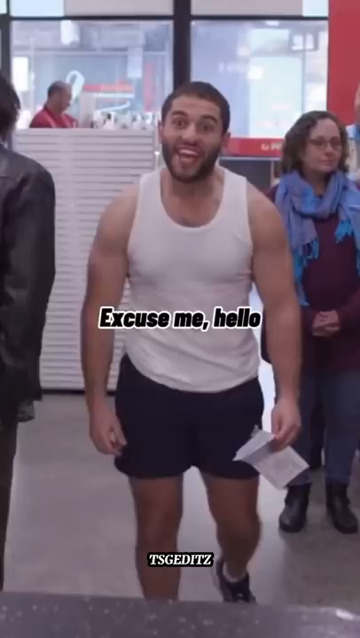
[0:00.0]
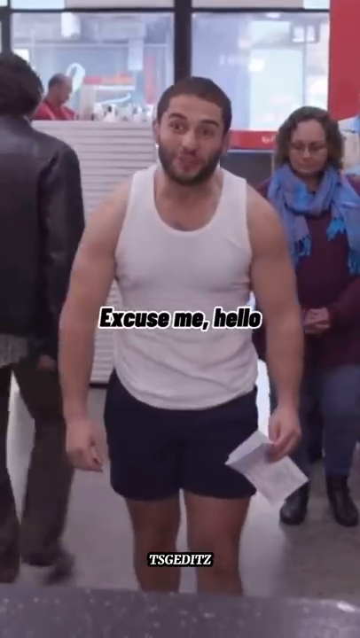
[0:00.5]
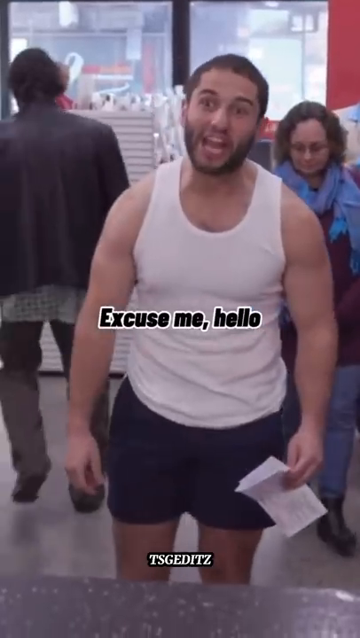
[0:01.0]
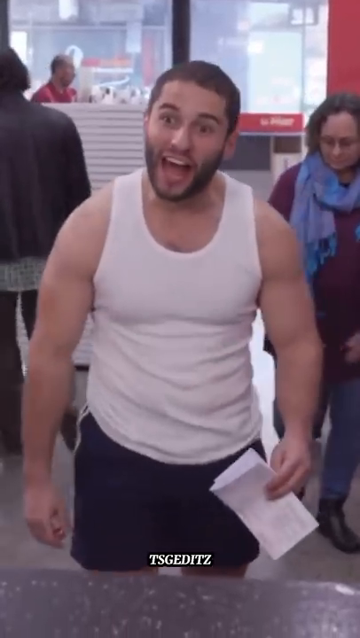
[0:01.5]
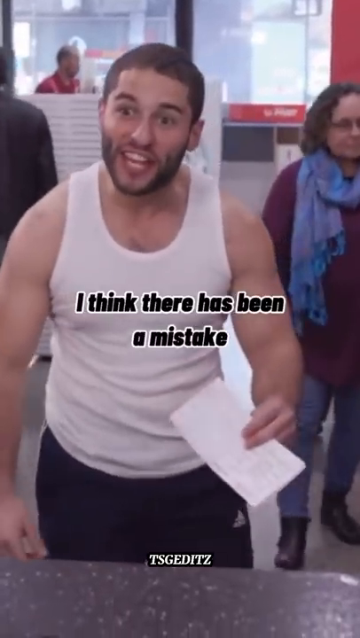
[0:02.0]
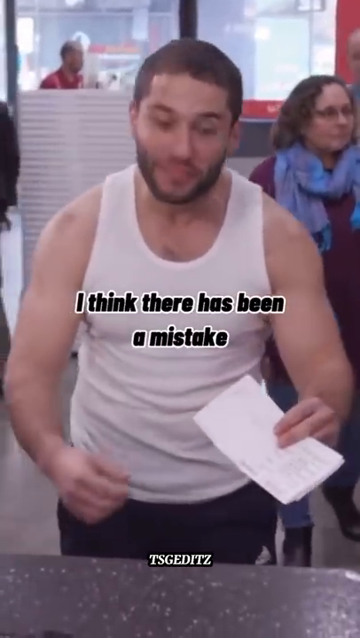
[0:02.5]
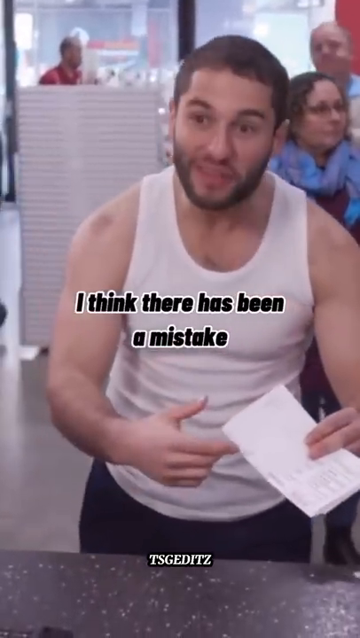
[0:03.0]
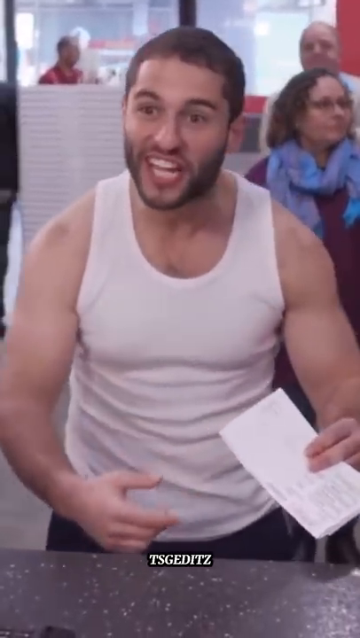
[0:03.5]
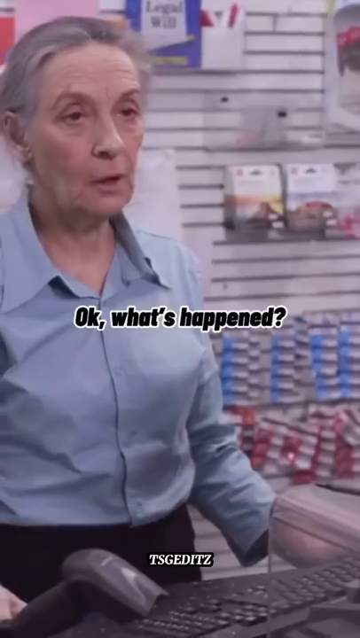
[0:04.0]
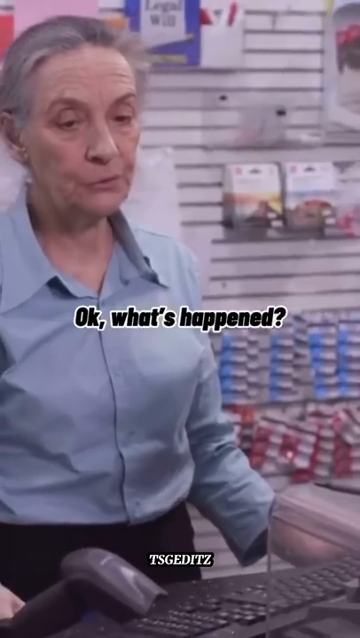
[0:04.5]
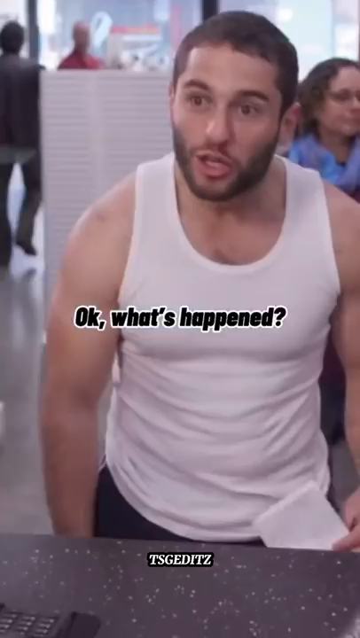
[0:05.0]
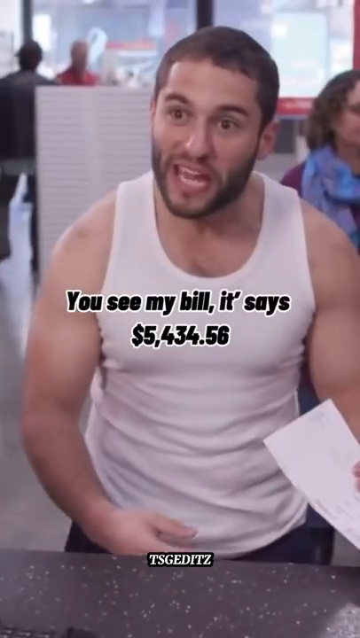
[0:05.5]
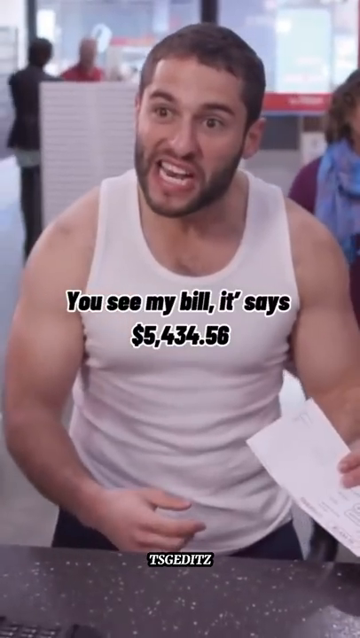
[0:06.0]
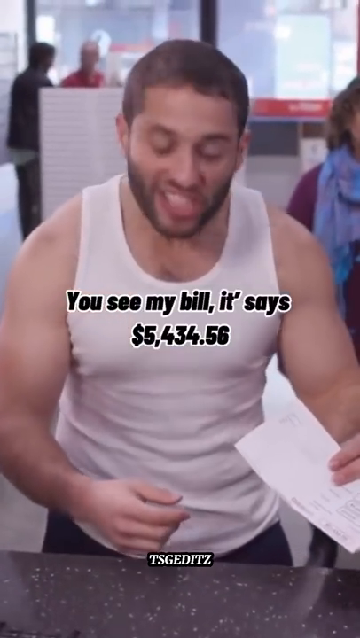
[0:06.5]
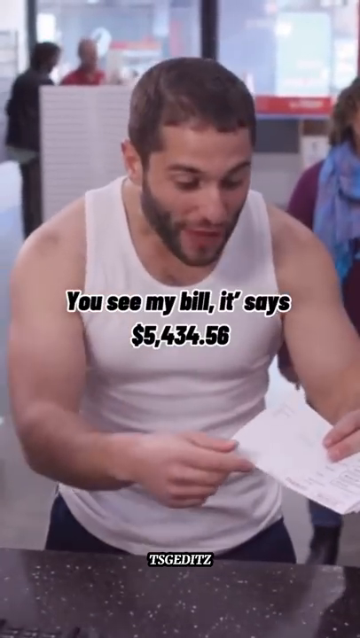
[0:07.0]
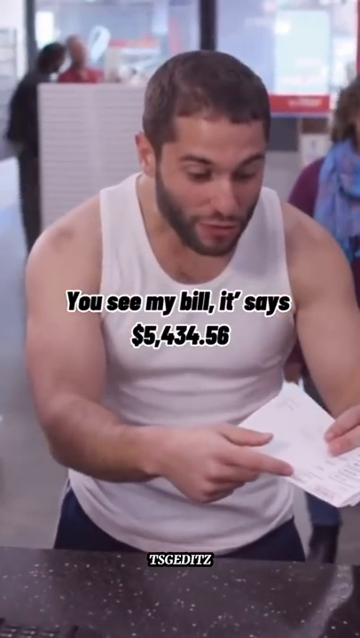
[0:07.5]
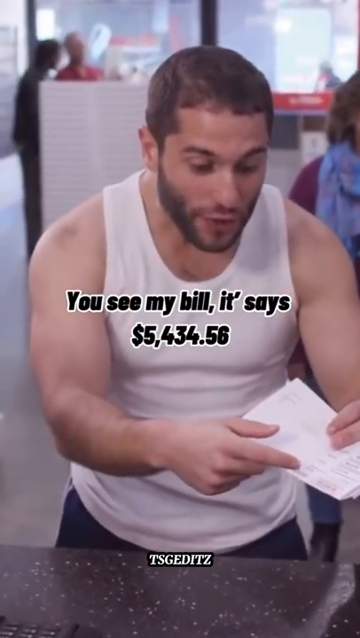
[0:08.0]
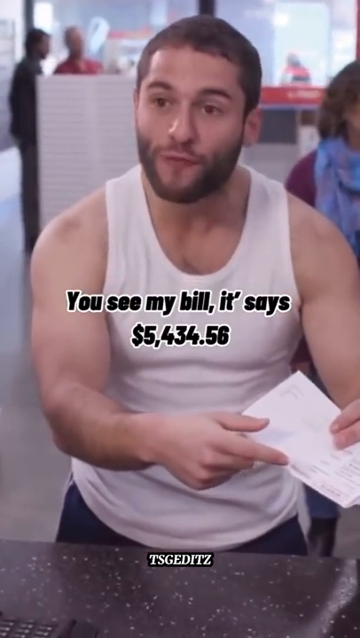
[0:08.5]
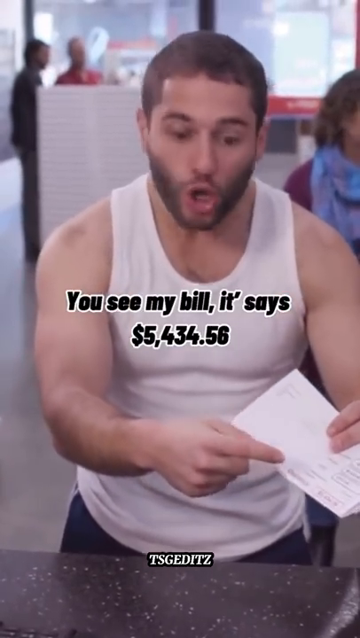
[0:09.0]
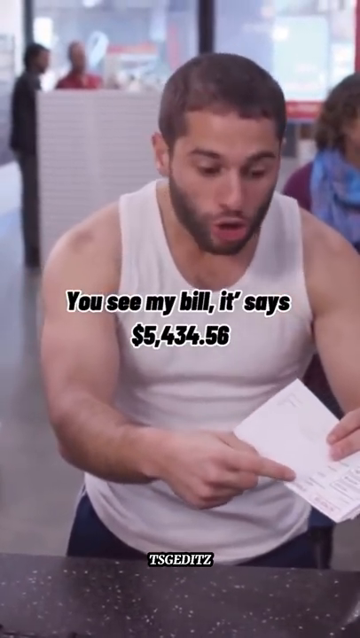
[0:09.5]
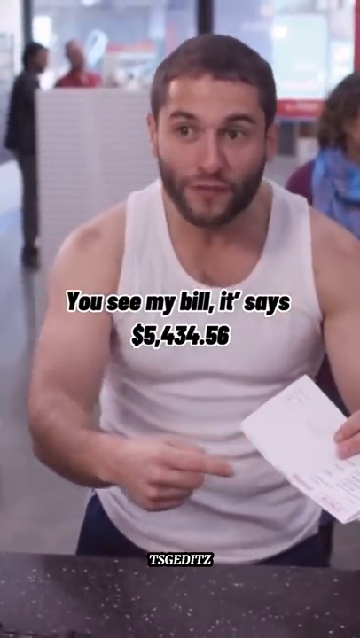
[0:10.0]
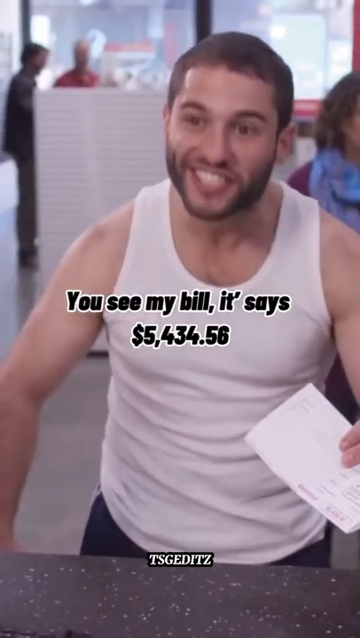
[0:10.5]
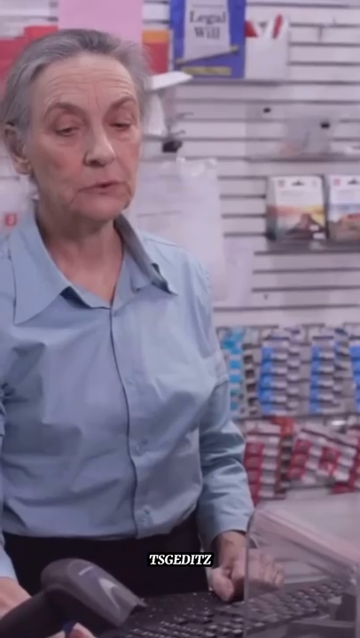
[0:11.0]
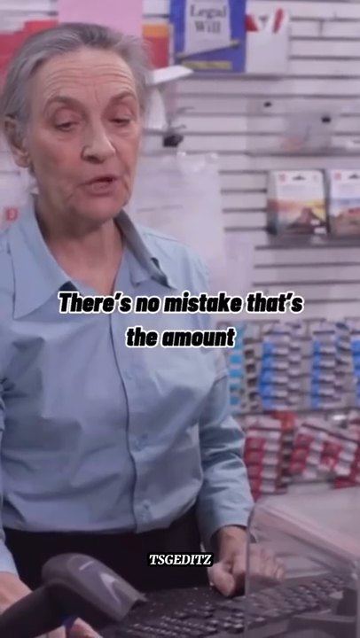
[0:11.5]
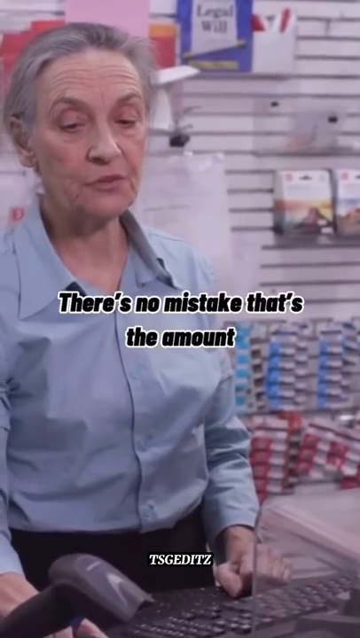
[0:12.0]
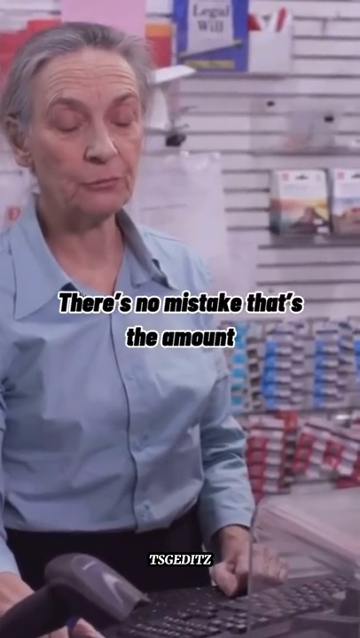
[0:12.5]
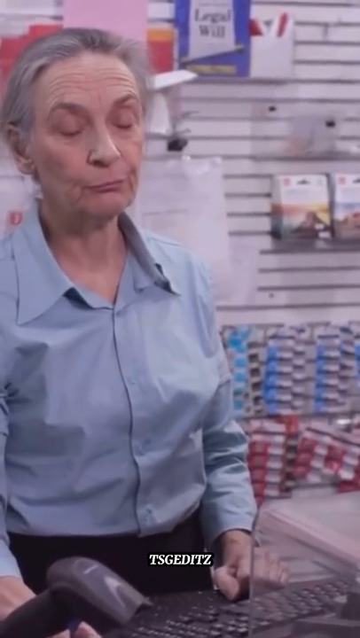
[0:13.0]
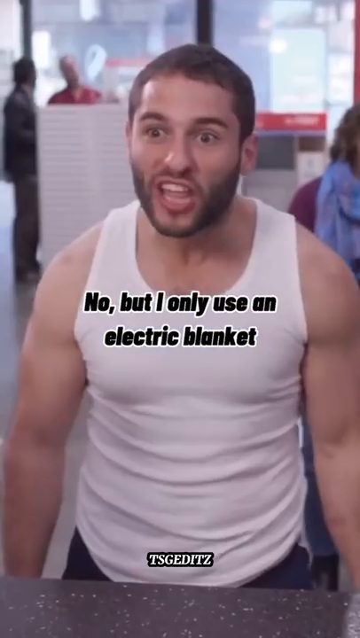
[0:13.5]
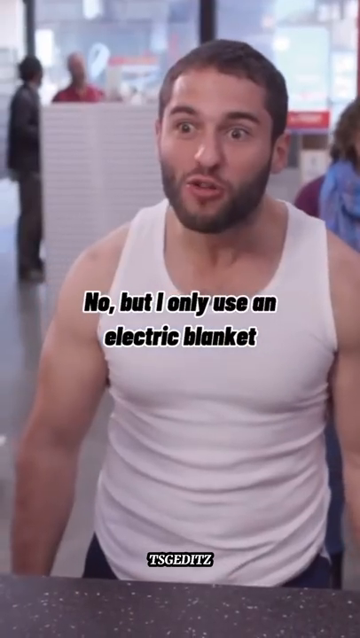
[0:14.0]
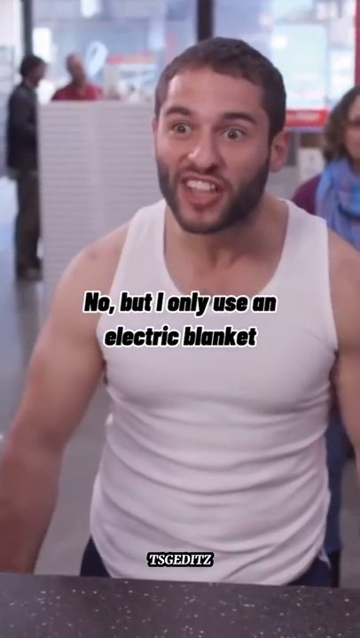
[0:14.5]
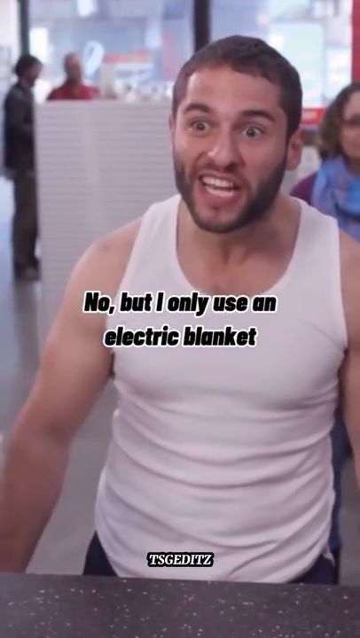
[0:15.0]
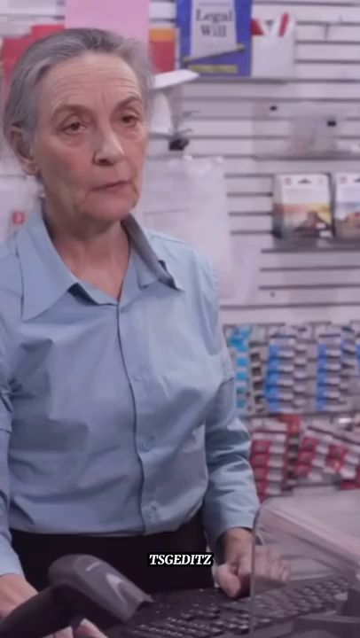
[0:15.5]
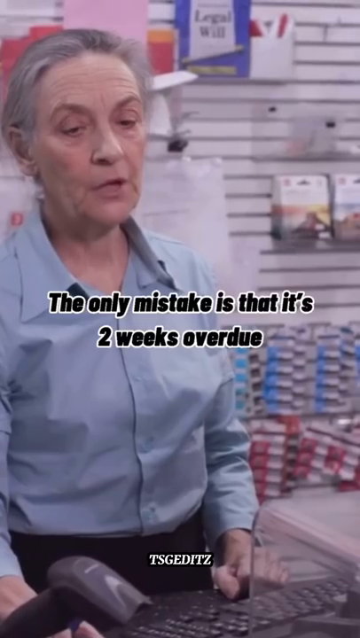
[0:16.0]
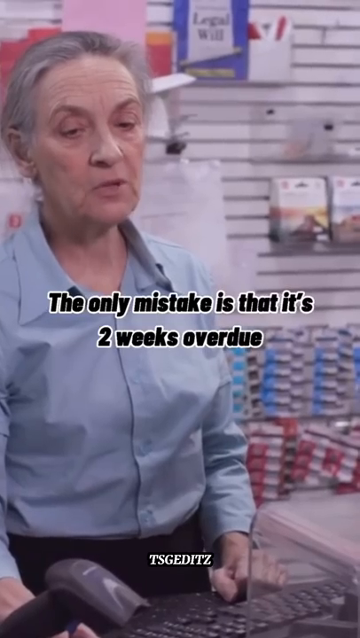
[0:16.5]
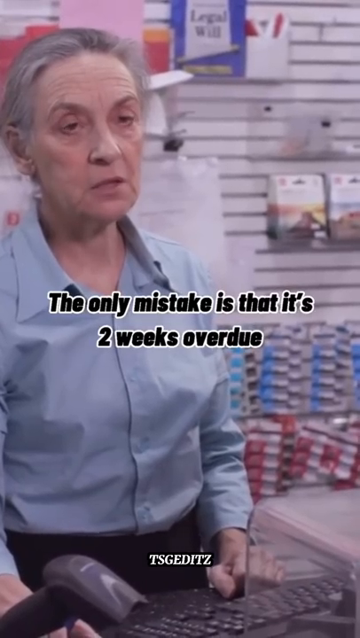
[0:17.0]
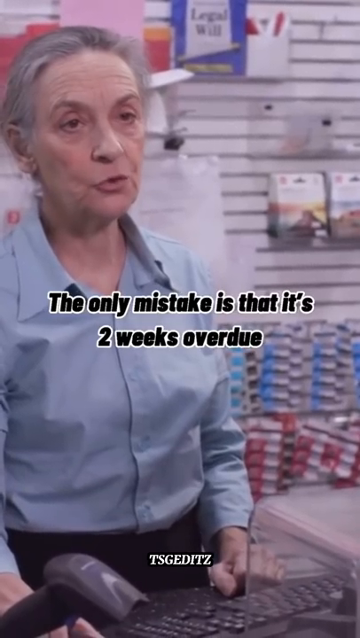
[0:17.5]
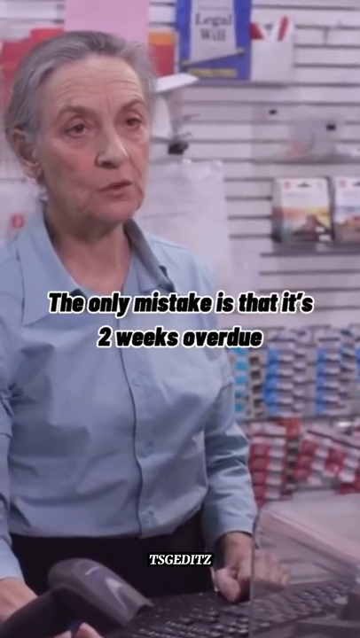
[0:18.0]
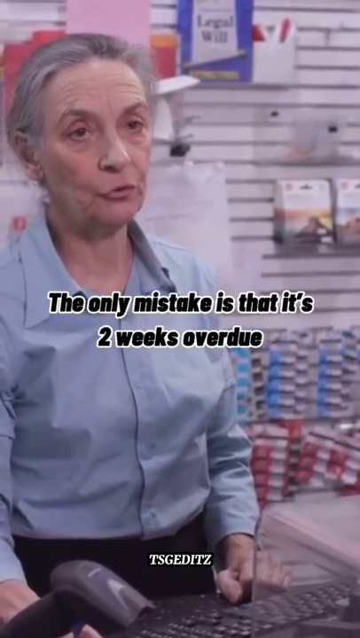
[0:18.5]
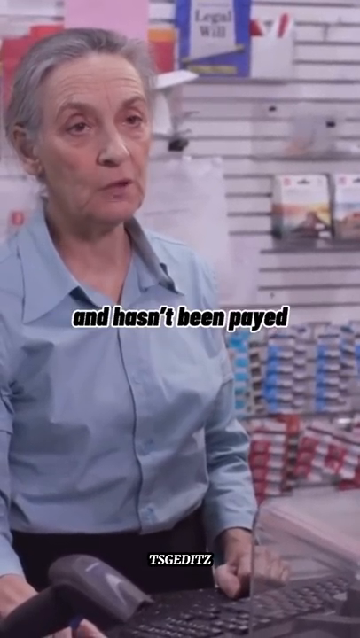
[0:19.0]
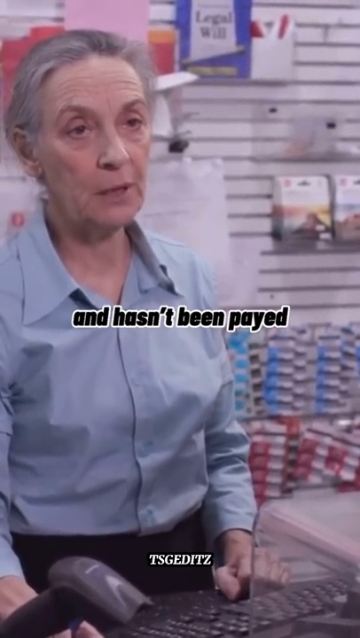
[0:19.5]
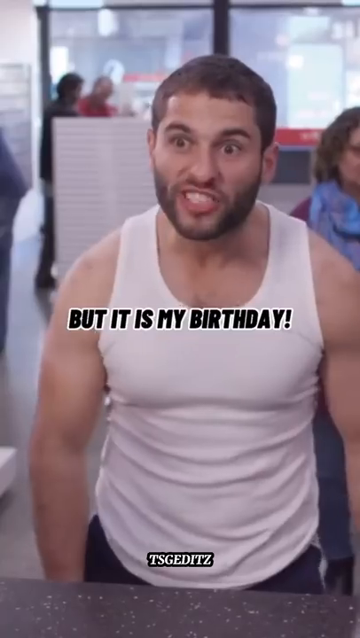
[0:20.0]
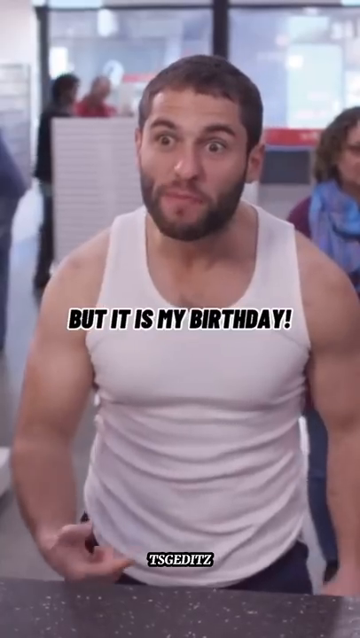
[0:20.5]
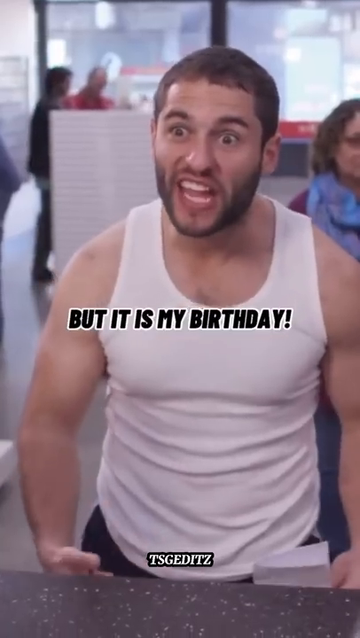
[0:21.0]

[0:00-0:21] A man comes up to a cashier. He is wearing what appear to be black basketball shorts and a white tank top, is dressed very casually, and looks somewhat muscular, possibly just back from the gym. He seems to be holding a check, and he says, "I think there's been a mistake," pointing to the piece of paper and looking somewhat shocked. He is talking to an older woman behind the counter who does not look amused; she seems annoyed and somewhat grumpy. She replies, "Oh, what's happened?" while kind of rolling her eyes. Pointing to the paper, flabbergasted, he says, "You see my bill, it says $5,434.58." Rolling her eyes again and remaining fairly stoic, she says, "There's no mistake, that's the amount." He says, "No, I only used one electric blanket," shouting and seemingly gritting his teeth as if upset. She says the only mistake is that it hasn't been paid. He says, "But it's my birthday," looking flabbergasted again.